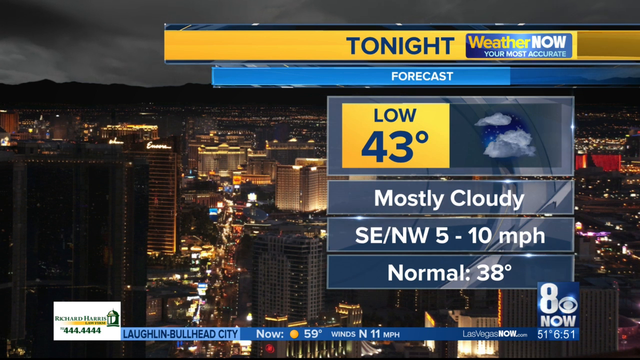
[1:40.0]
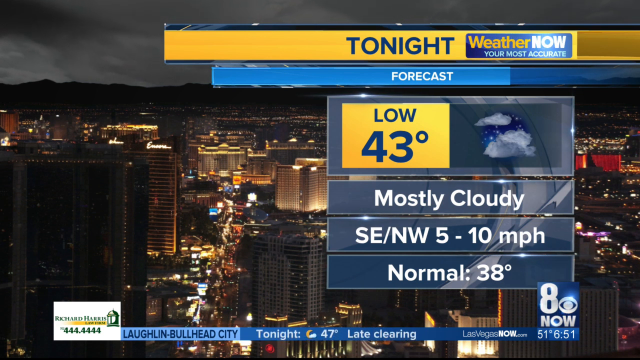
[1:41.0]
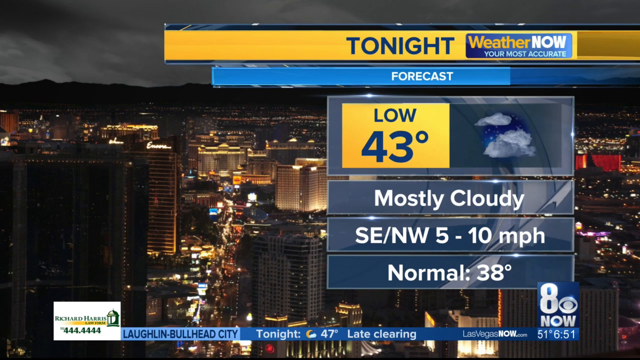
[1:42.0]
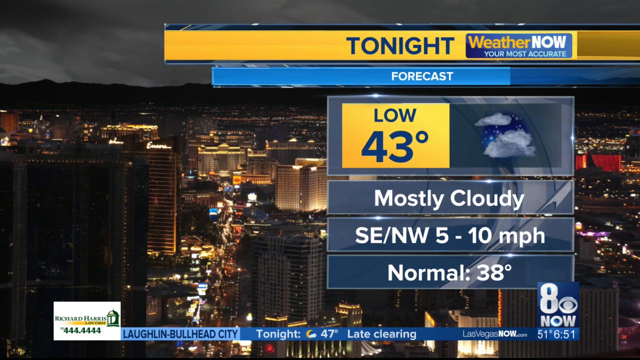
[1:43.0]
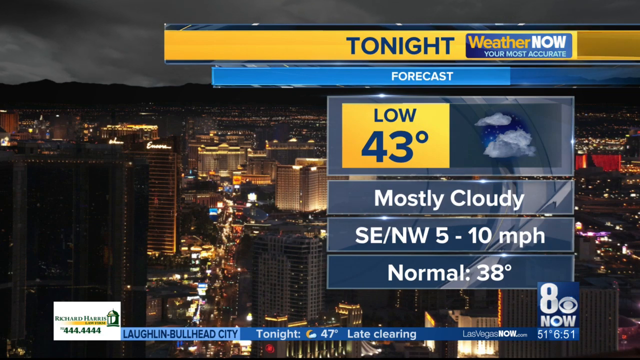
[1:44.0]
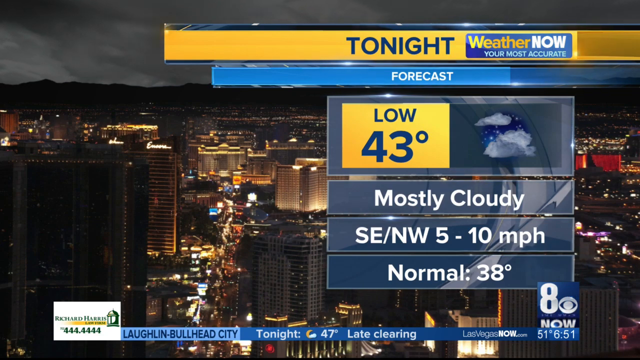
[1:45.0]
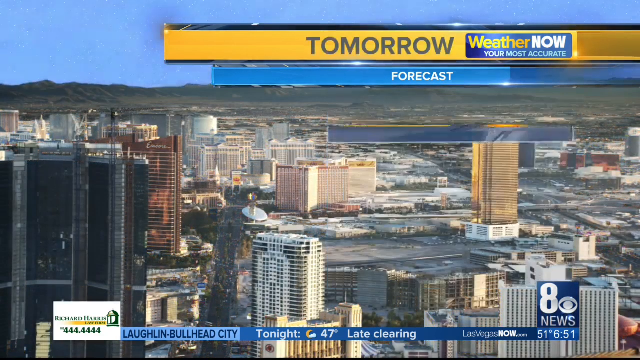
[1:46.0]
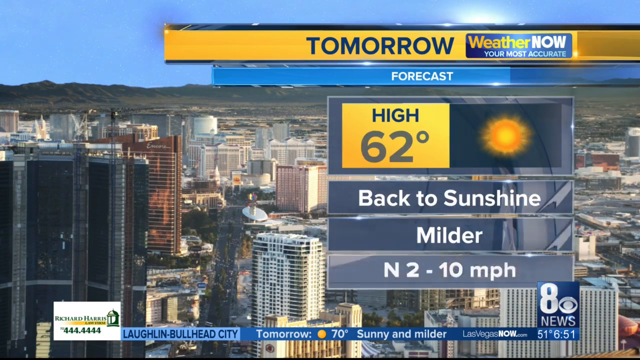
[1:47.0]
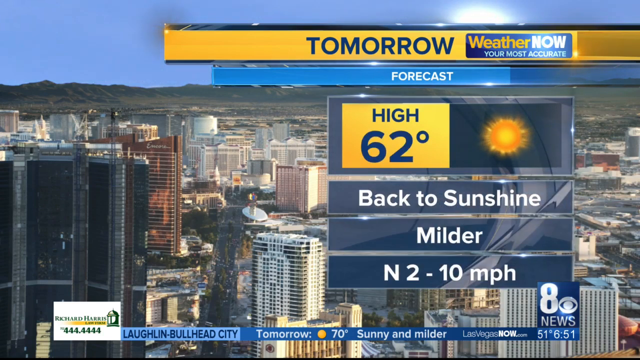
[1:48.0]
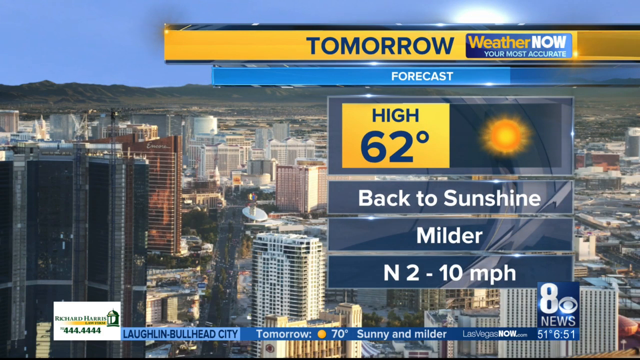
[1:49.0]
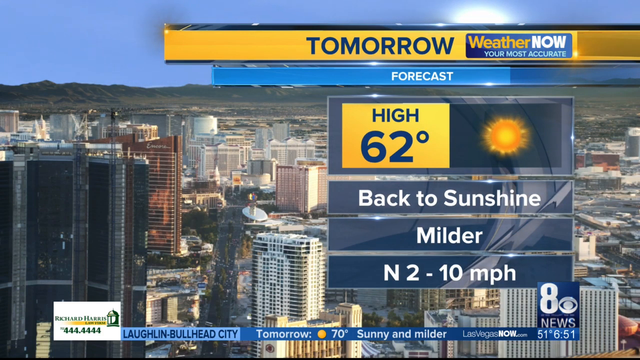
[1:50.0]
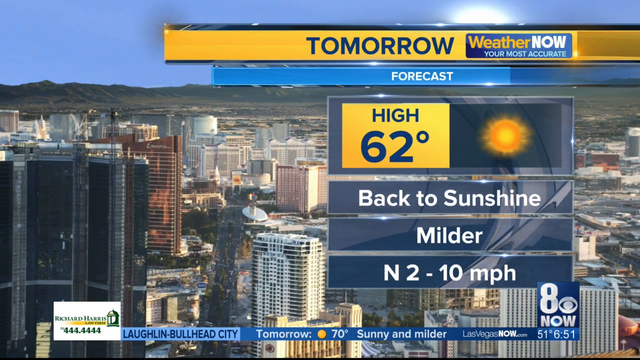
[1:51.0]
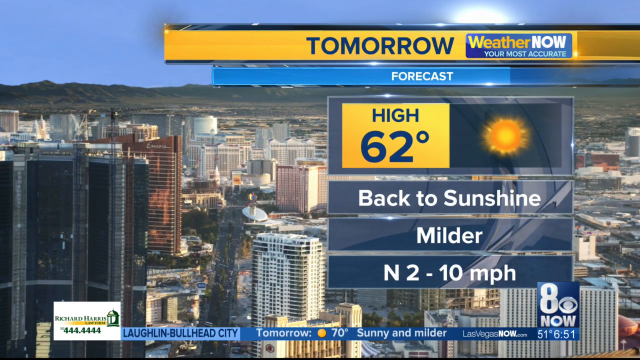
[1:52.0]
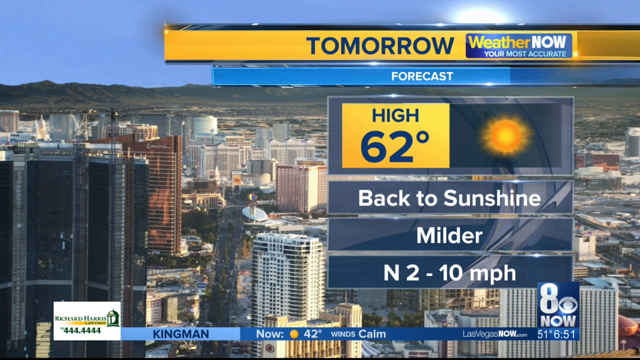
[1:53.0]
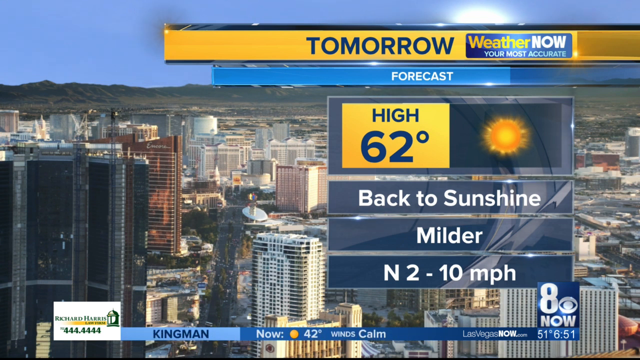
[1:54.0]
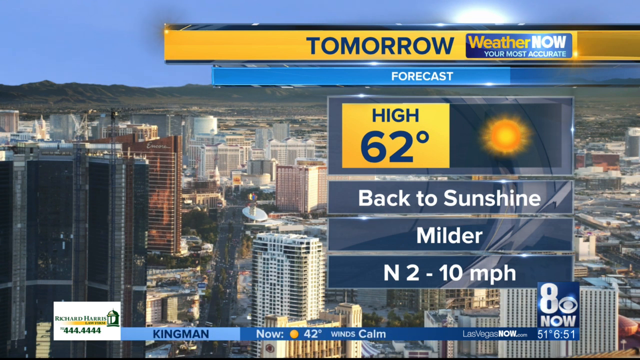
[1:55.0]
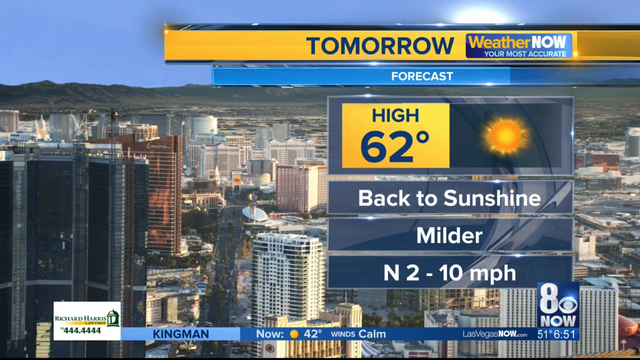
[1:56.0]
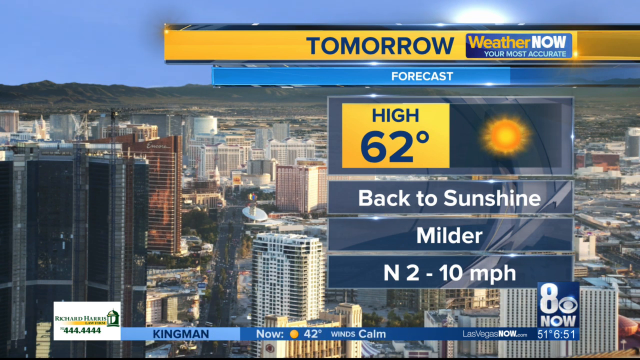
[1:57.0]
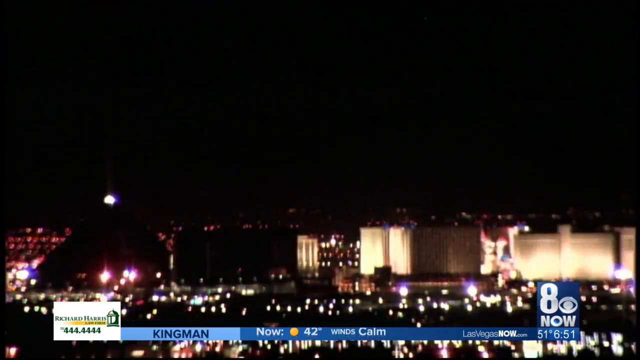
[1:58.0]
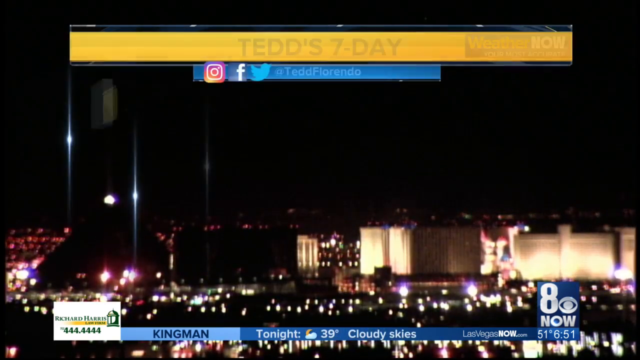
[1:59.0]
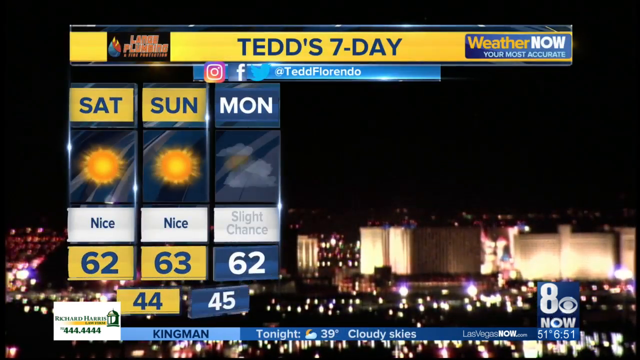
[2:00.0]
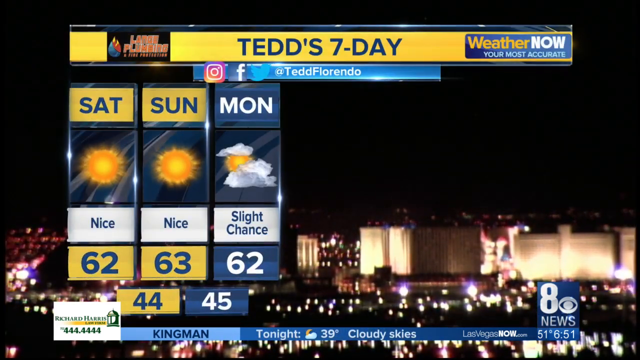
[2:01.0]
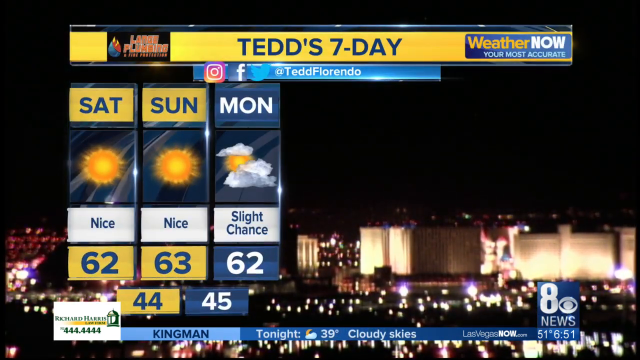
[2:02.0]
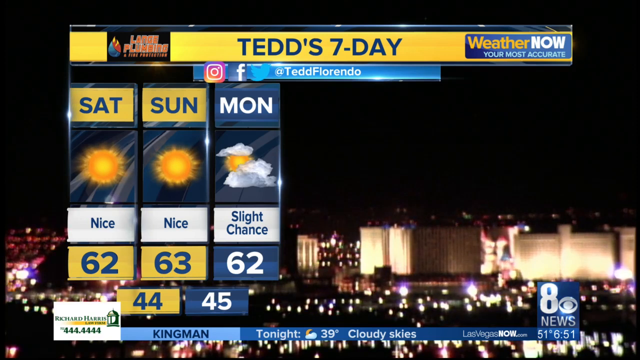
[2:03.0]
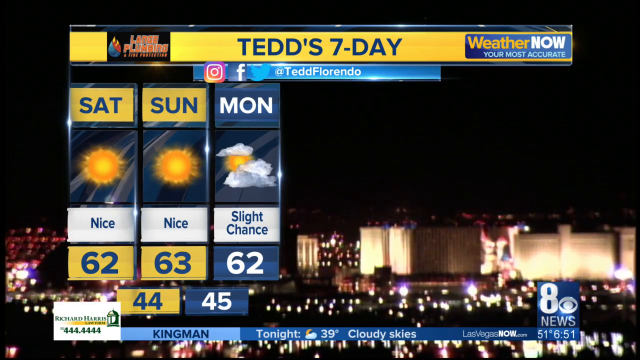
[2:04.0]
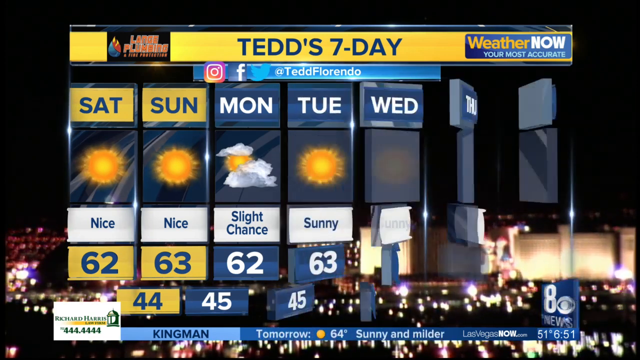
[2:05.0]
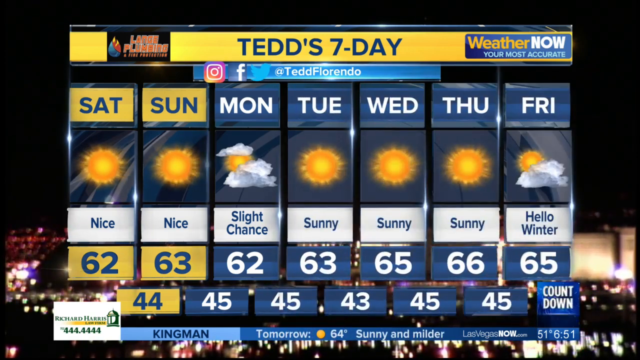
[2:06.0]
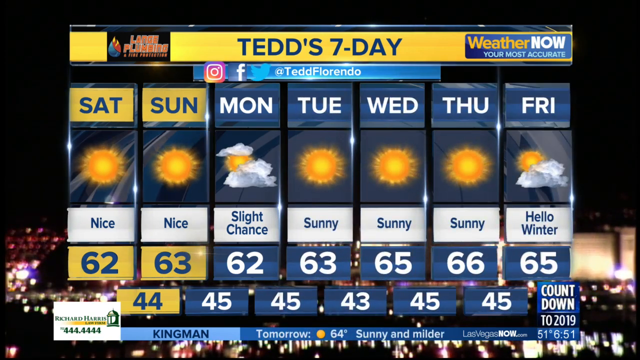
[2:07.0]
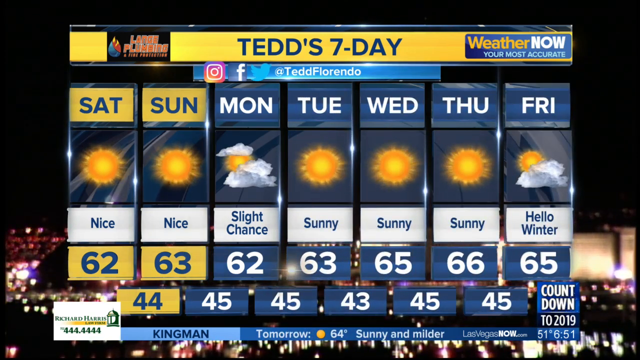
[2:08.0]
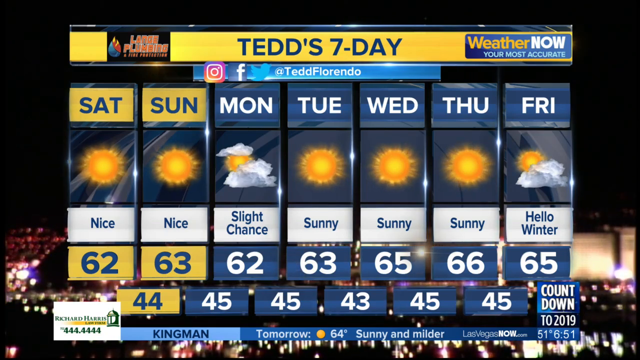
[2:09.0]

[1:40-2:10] The video stays on the same weather graphic for some time, then transitions to tomorrow's forecast. The gold strap now says "tomorrow" in blue, and the forecast gradually animates onto the screen. The top box says "high 62 degrees" with an image of the sun next to it. Below, the lines read "back to sunshine", "milder" and "N2 to 10 MPH". The background is a city skyline with blue sky and hills in the distance, so this graphic is in daytime. Then a dramatic animation sends stripes flying across the screen, a caption with the word "now" appears, and a new forecast animates on. A gold strap across the top reads "Ted's seven day" in blue. Beneath it are small visuals for each day: Saturday, sun, "nice", 62; Sunday, sunshine, "nice", 63; Monday, sun and some clouds, "slight chance", 62; Tuesday, sun, "sunny", 63; Wednesday, sun, "sunny", 65; Thursday, sun, "sunny", 66; Friday, sun and a cloud, "hello winter", 65. Below these are more numbers, possibly the minimum temperature or the wind speed; it is very hard to tell.